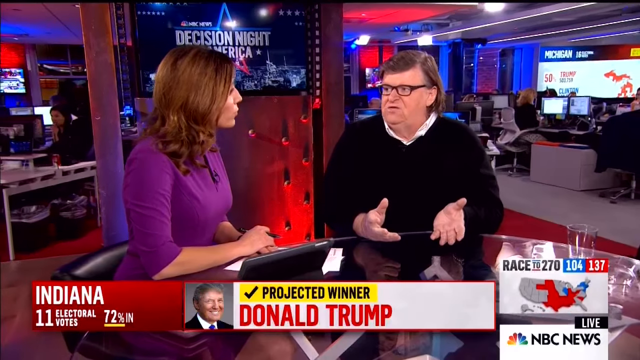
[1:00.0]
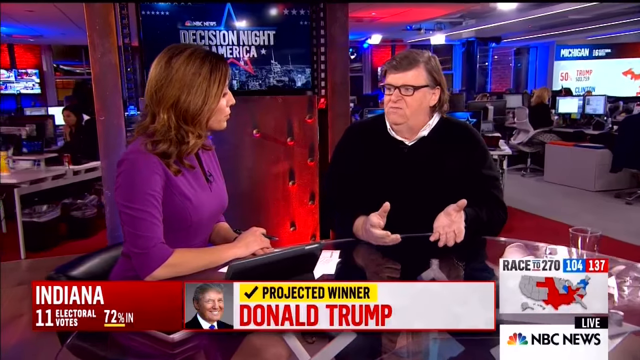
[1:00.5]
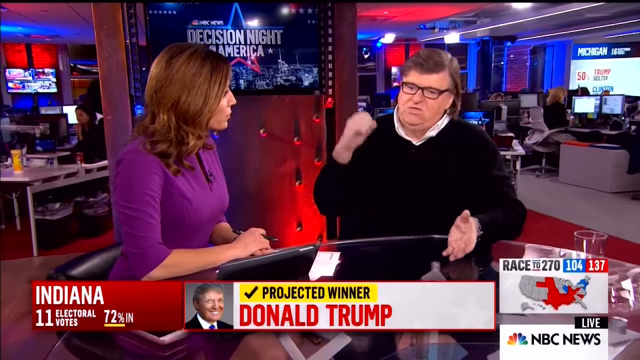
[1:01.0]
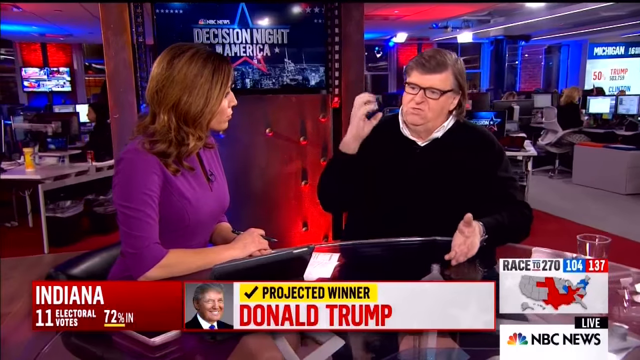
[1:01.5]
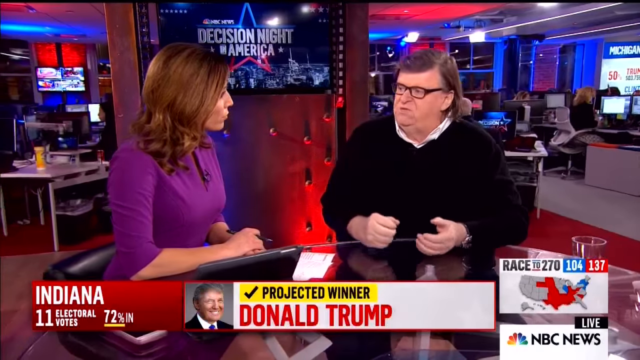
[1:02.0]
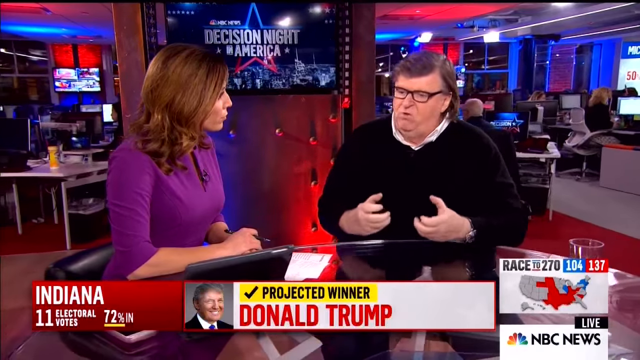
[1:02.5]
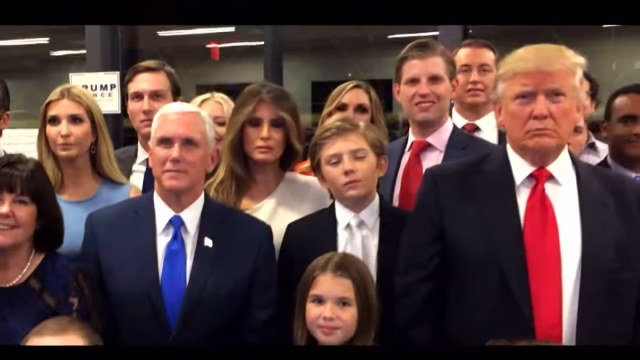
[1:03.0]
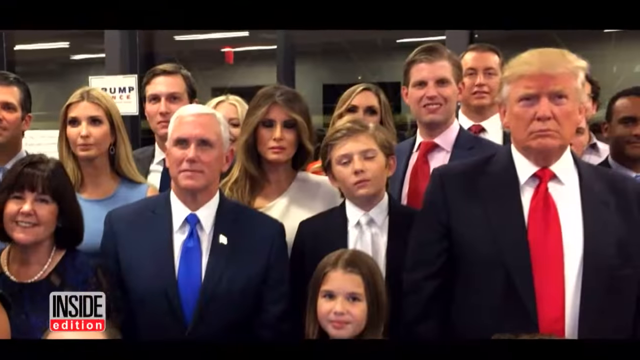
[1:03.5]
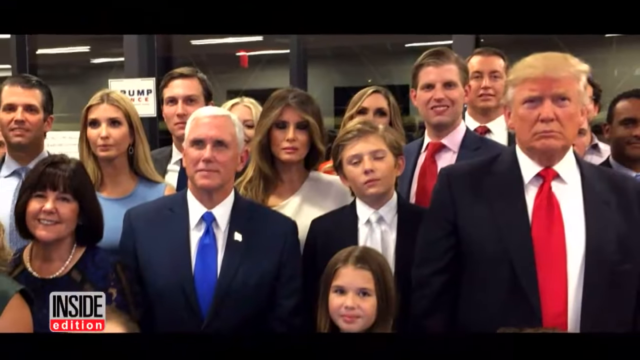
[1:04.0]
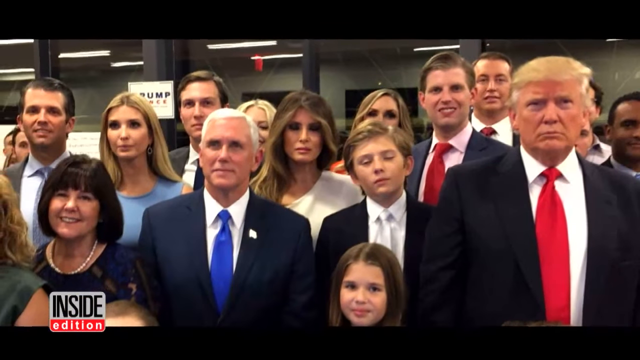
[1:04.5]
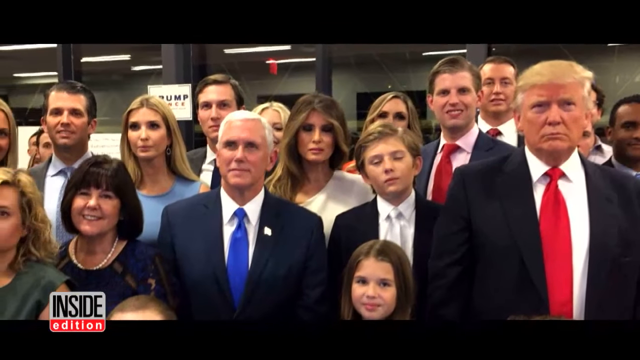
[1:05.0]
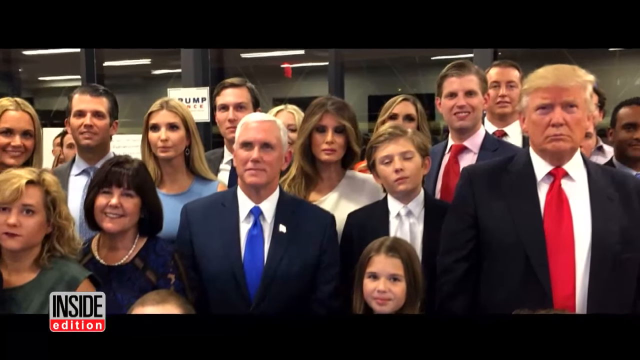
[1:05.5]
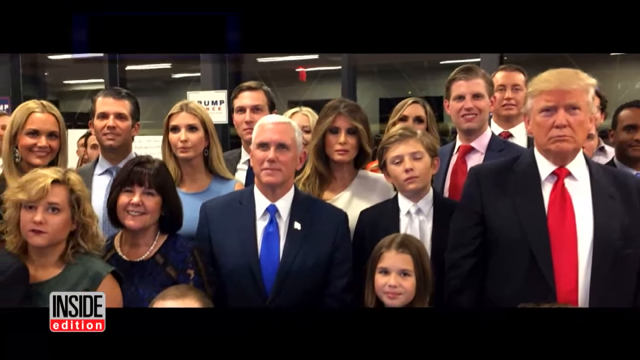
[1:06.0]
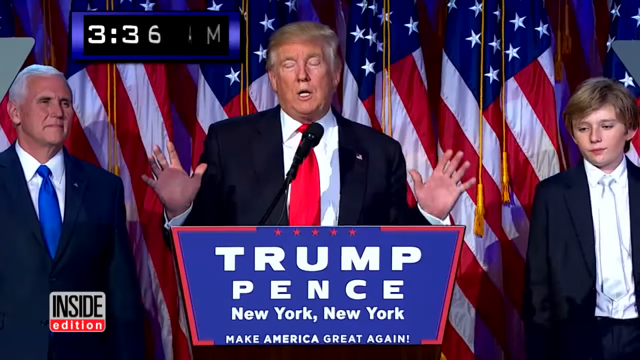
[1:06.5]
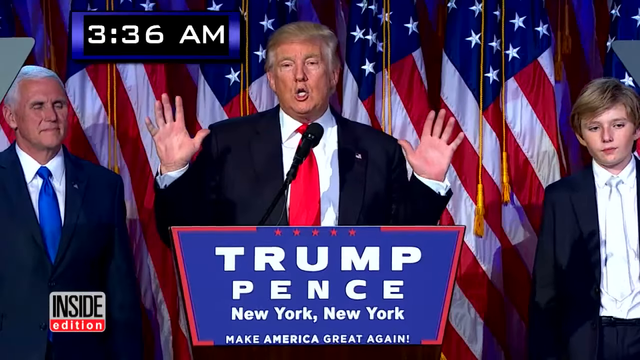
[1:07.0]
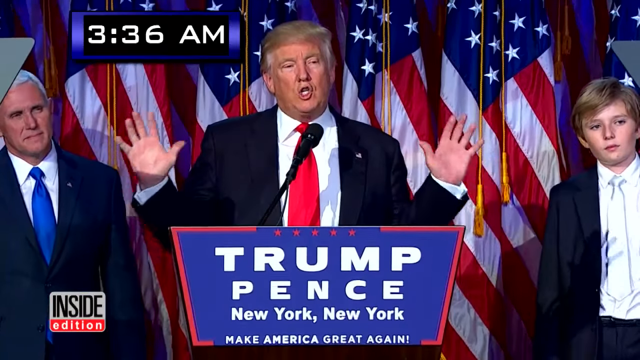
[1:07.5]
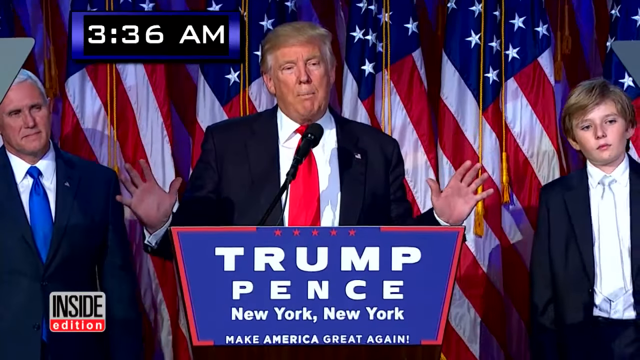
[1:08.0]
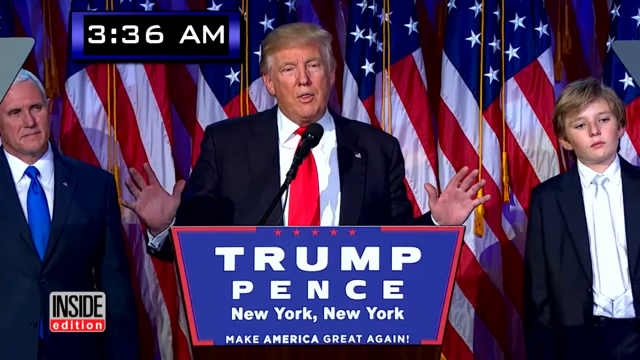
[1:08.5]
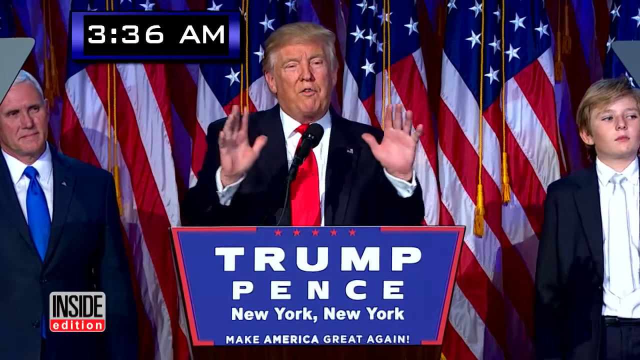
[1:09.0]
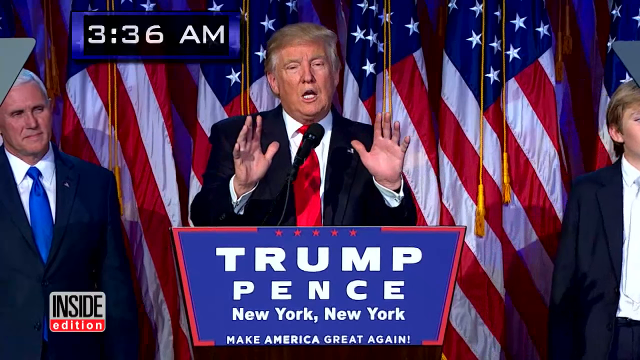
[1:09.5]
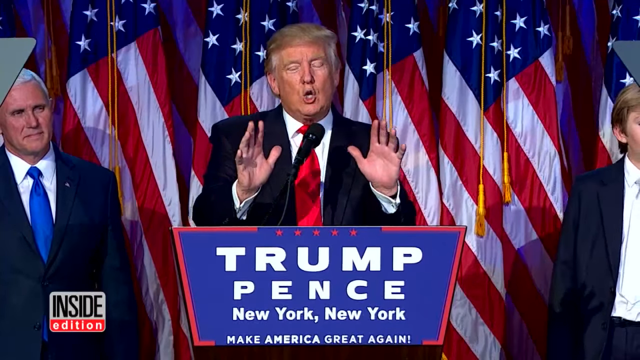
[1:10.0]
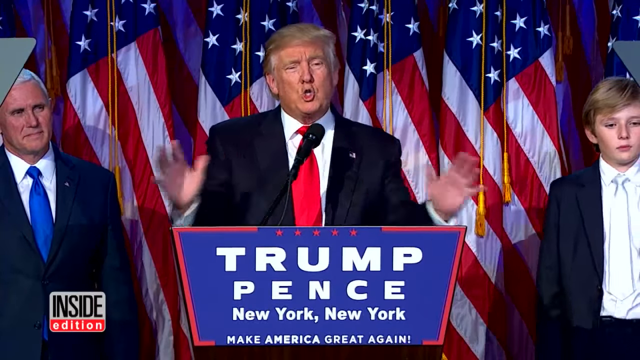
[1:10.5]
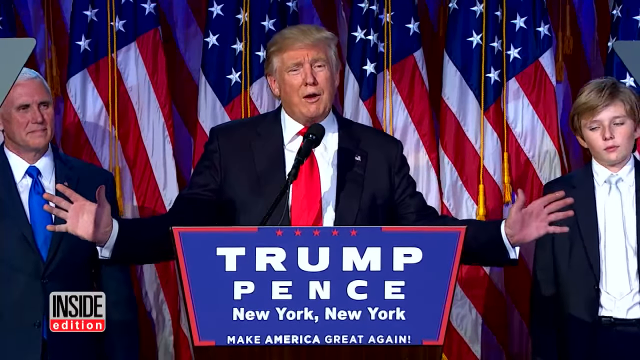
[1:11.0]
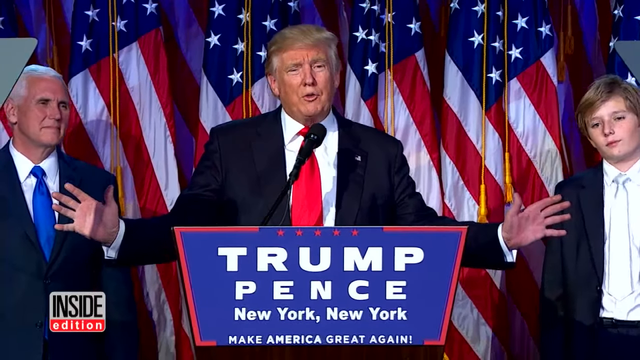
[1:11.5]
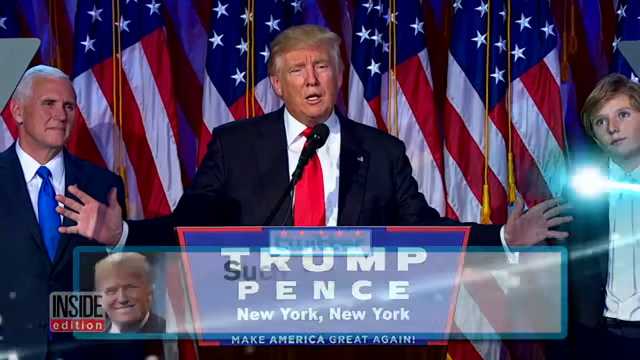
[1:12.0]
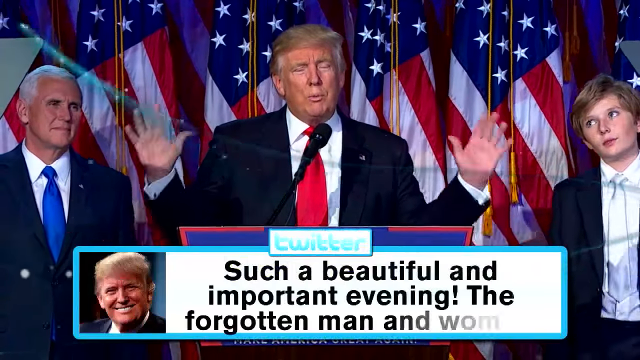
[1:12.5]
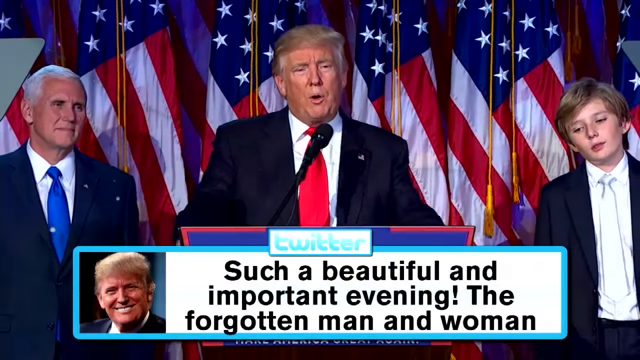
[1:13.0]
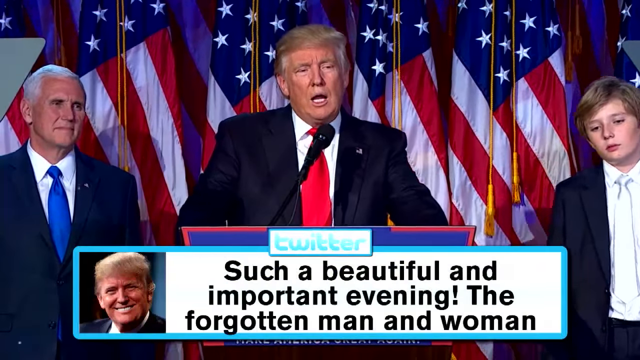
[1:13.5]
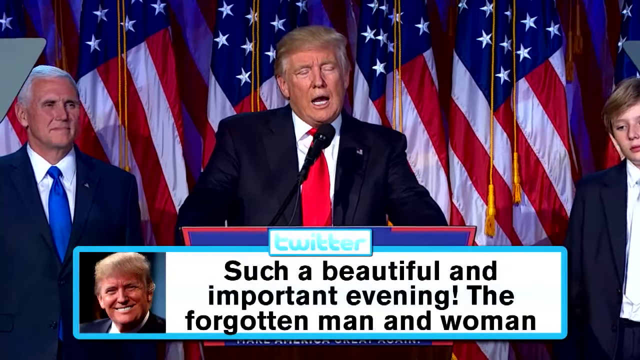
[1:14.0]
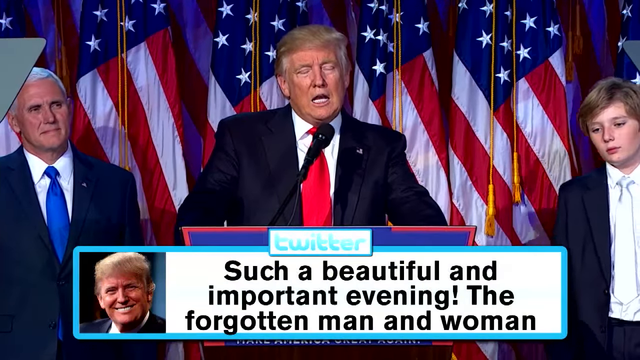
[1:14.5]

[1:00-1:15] The man in the newsroom is interviewed at the news desk and looks like he is analyzing the election. The woman interviewing him wears a purple dress and looks at him, while he looks at her and at the camera. The video then shows a picture of Donald Trump with his family, all looking toward the camera, apparently a campaign photo. The Inside Edition logo is still in the bottom left. Next comes video of Trump at a podium speaking into a microphone; the graphic on his podium reads "Trump Pence New York New York make America great again." Pence is in the background behind him, Trump's son is on the other side of him, and a number of American flags are centered behind him. Trump speaks toward the rally, very animated with his hands. A graphic at the bottom reads "Twitter such a beautiful and important evening the forgotten man and woman."